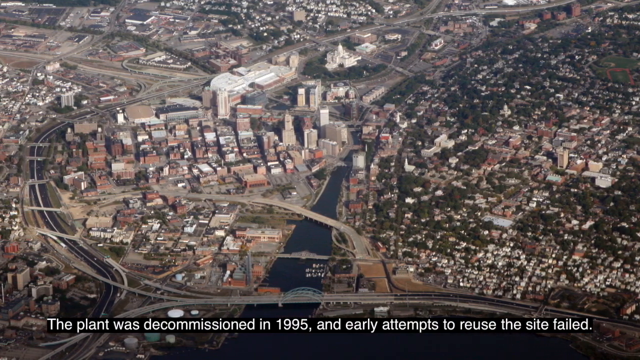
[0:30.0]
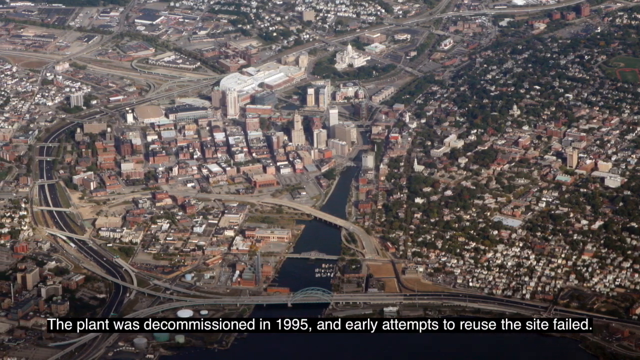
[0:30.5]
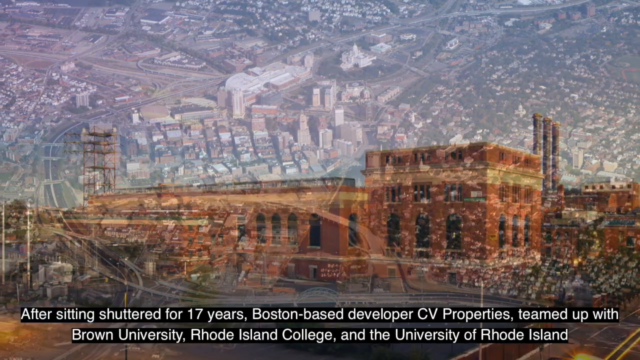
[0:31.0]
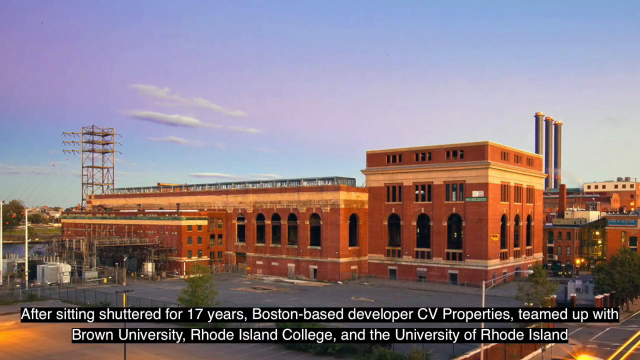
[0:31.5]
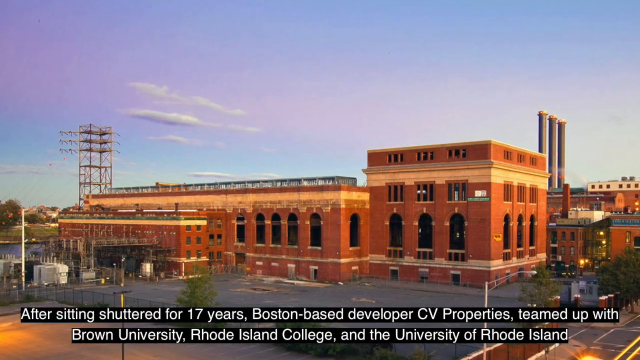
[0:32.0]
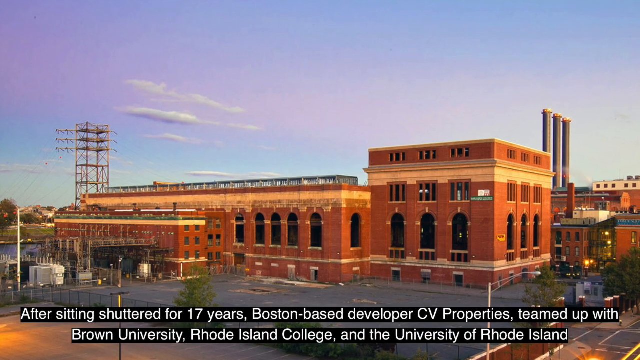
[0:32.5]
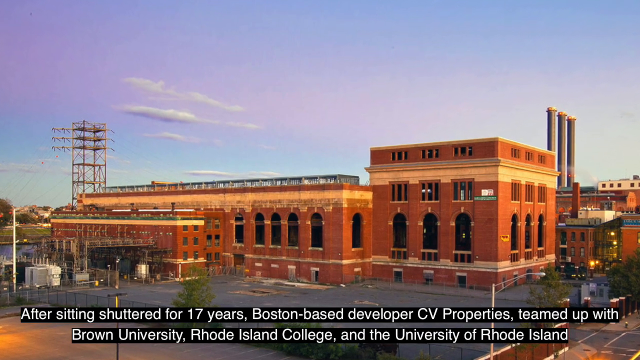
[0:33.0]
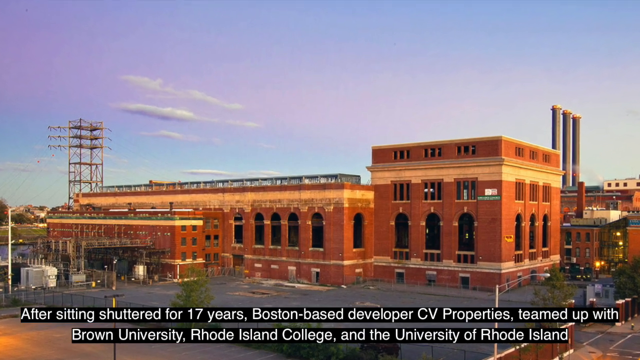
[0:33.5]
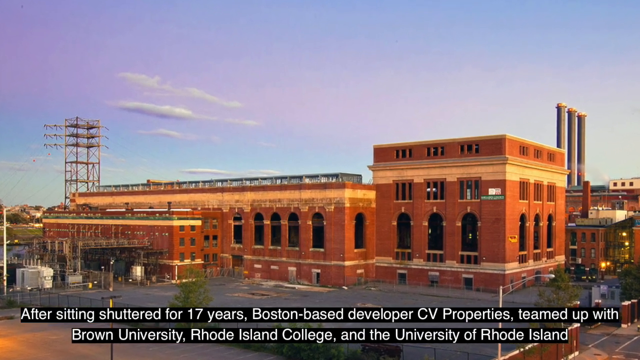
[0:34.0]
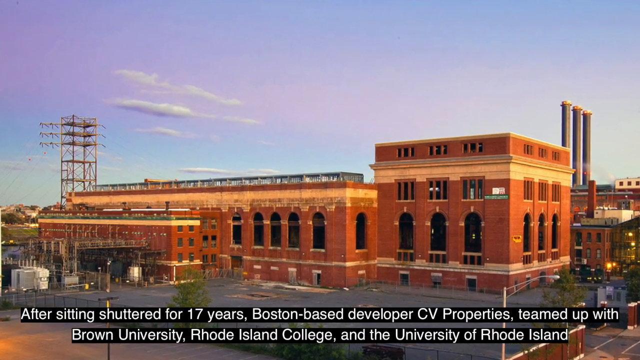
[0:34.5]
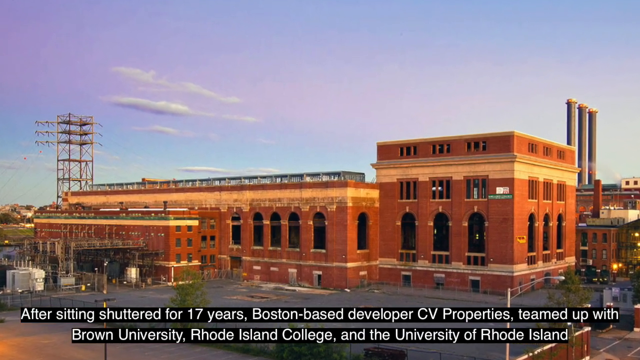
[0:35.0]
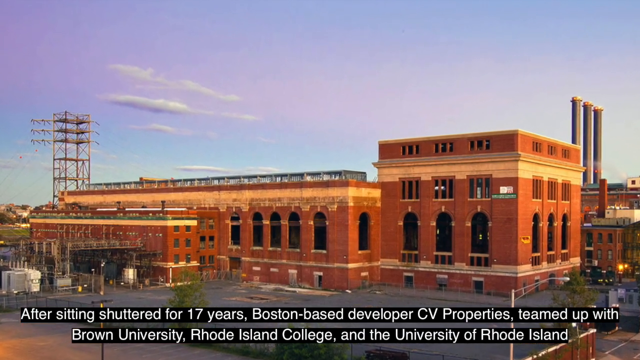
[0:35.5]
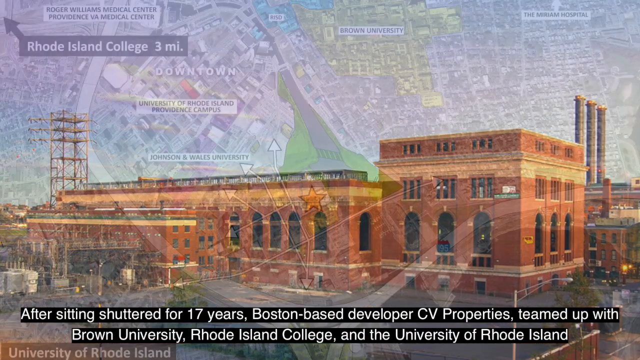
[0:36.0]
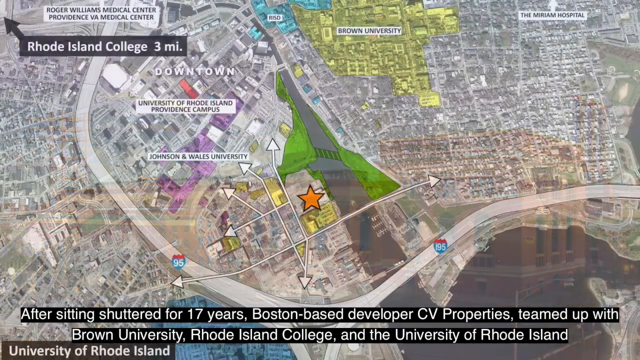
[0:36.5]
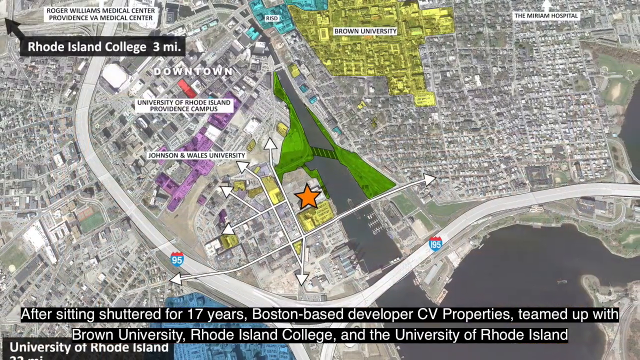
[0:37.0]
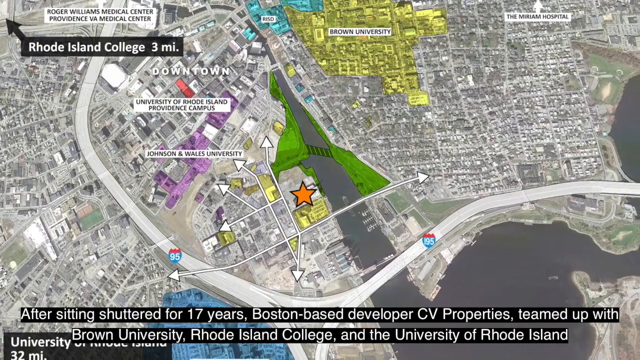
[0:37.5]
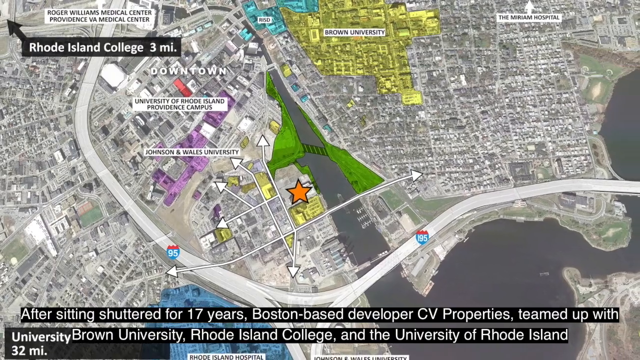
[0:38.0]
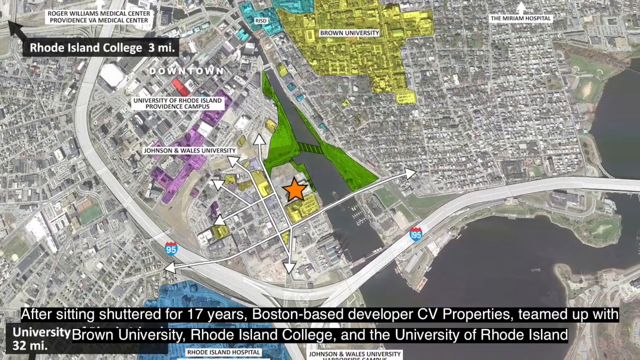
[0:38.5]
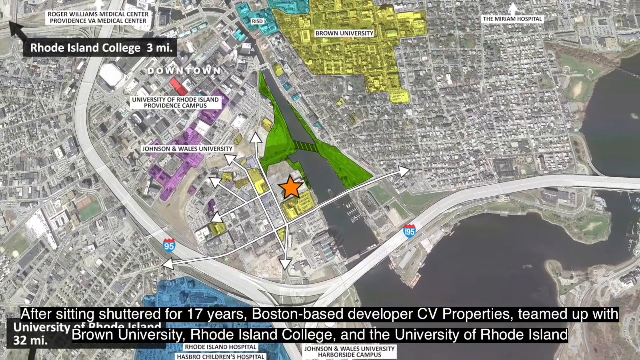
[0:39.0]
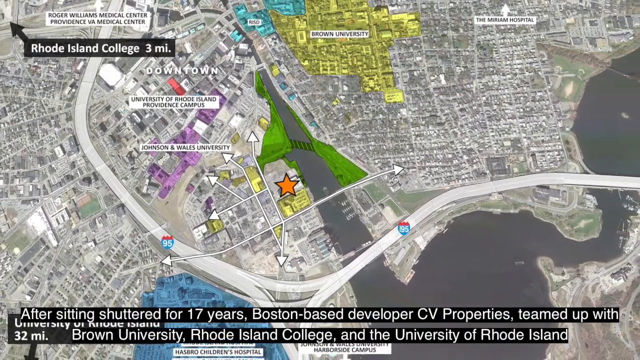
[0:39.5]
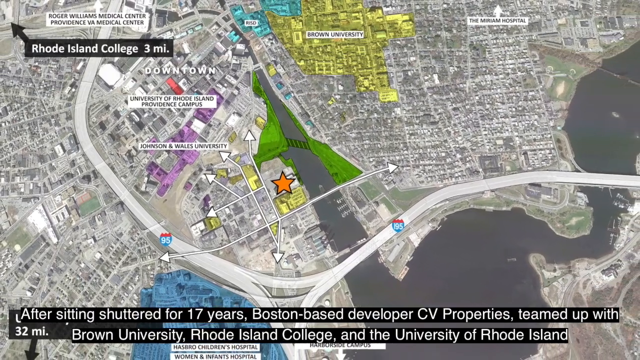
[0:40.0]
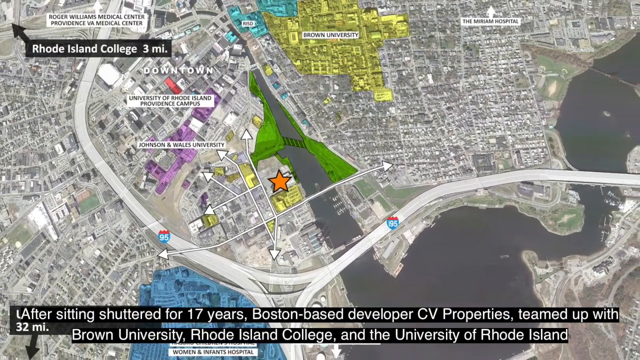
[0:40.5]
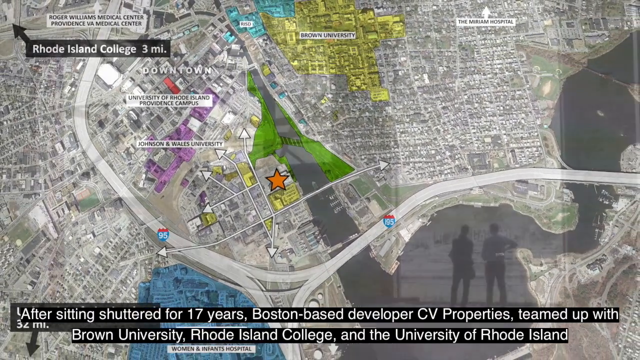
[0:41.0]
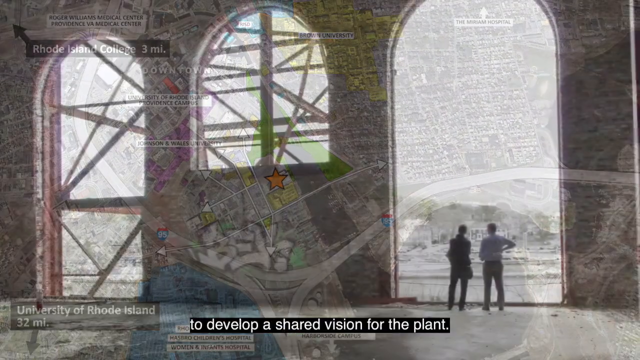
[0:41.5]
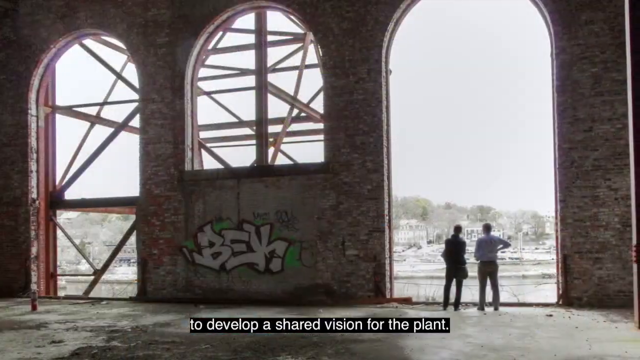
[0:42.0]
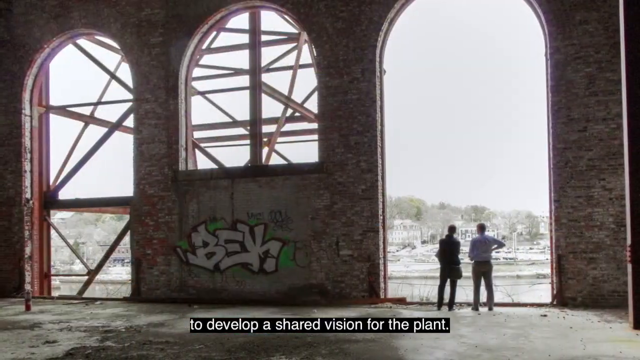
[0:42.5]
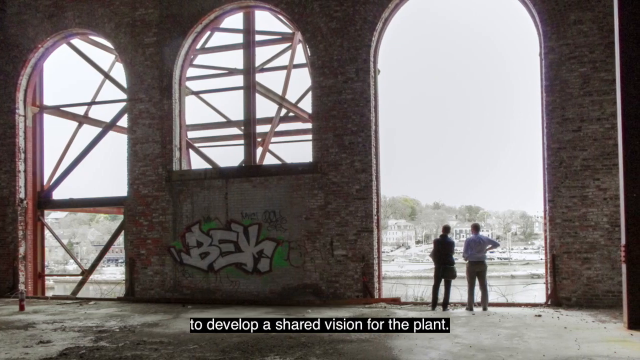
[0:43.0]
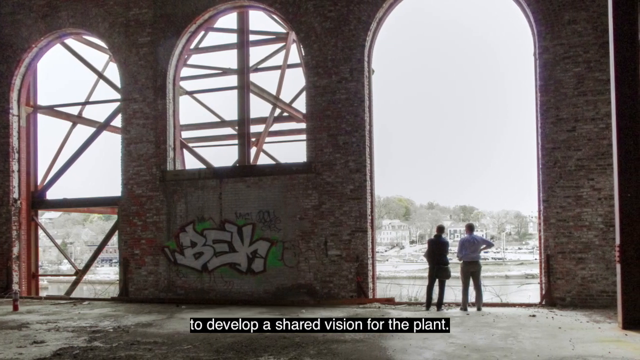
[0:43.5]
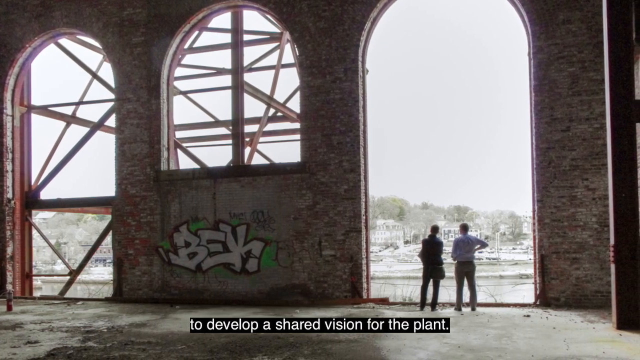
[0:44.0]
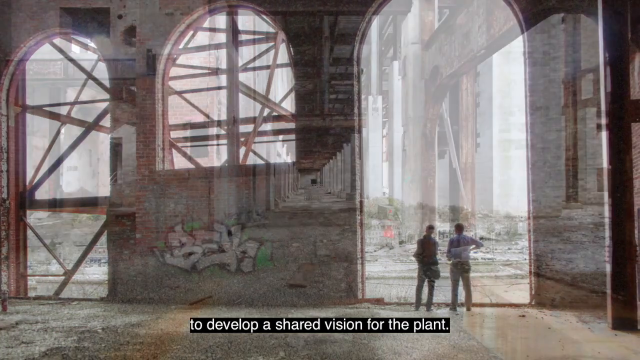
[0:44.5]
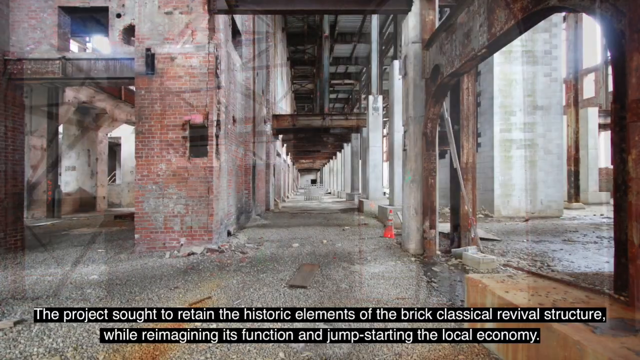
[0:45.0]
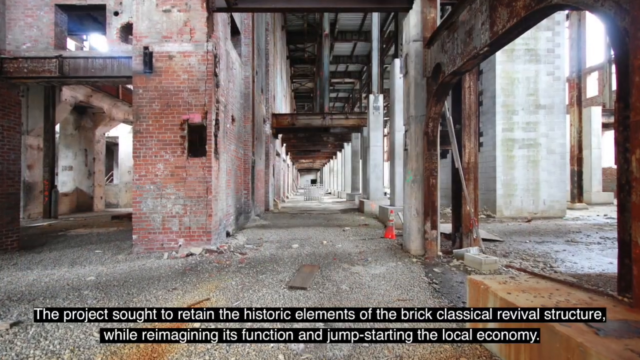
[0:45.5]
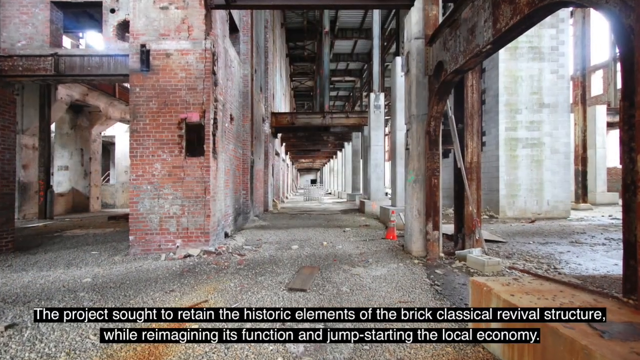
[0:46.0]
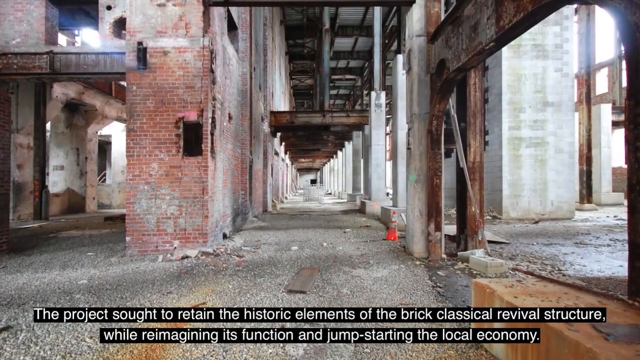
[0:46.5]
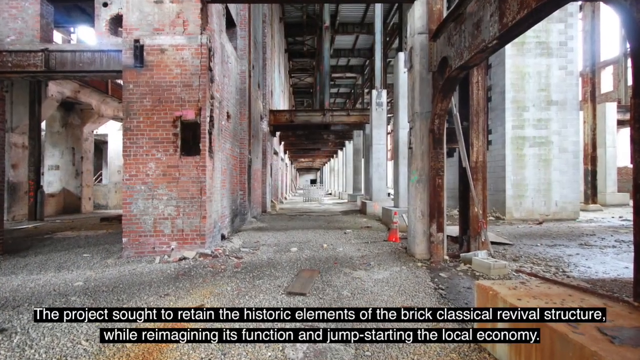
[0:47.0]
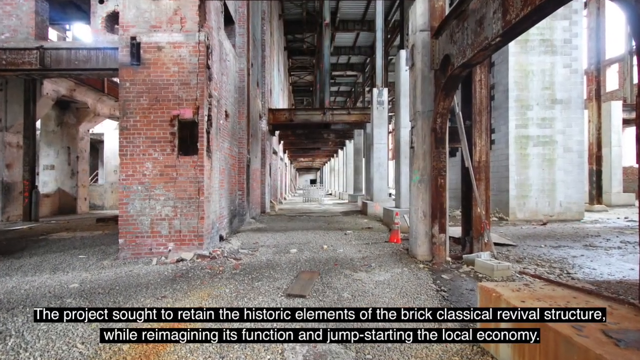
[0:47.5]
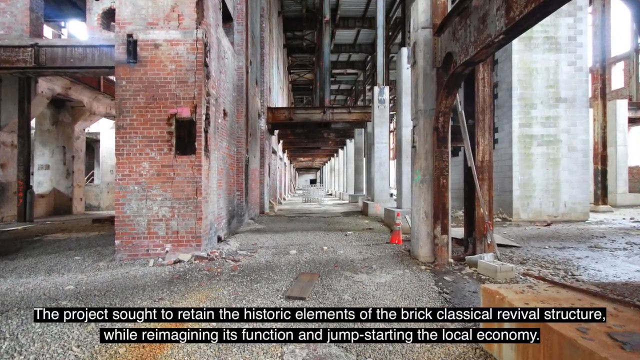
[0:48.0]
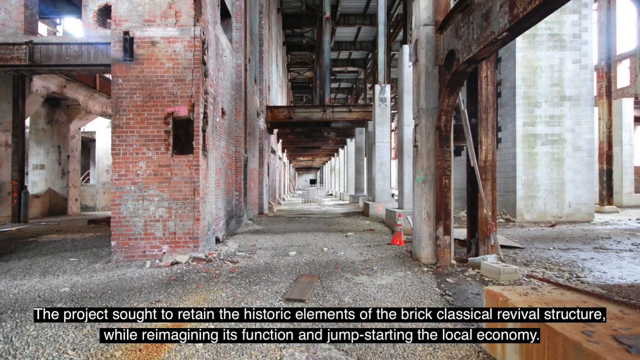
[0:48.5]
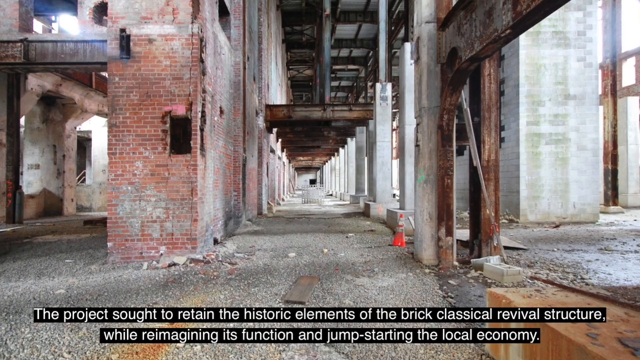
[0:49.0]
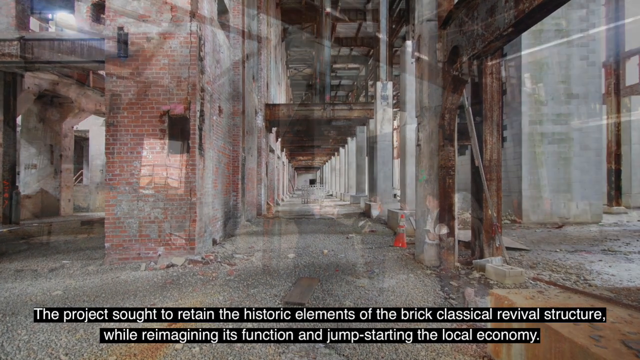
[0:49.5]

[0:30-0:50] A colored photo of a power plant appears with the text "after sitting shuttered for 17 years, Boston-based developer CV Properties teamed up with Brown University, Rhode Island College, and University of Rhode Island." The building is a brownish-orange color and is very large and wide. Next is a map with a couple of labels on it, showing what looks like a body of water with a bridge running through it. The following image shows the inside of part of a very large building, with some spray paint on one of the walls. Two individuals, seen from behind, are towards the right, in front of a very large opening in the building that goes outside. The next image is of what looks like an unfinished hallway, with text reading "the project sought to retain the historic elements of the brick" and "while reimagining its function and jump-starting the local economy."